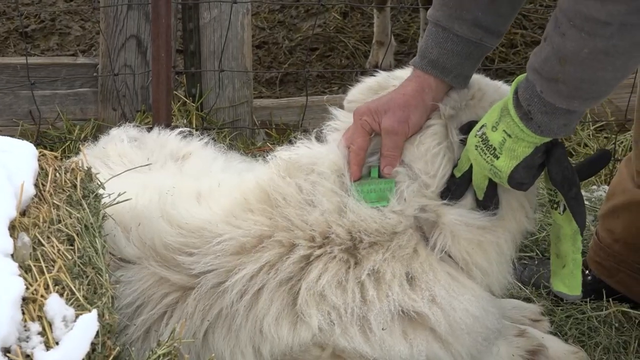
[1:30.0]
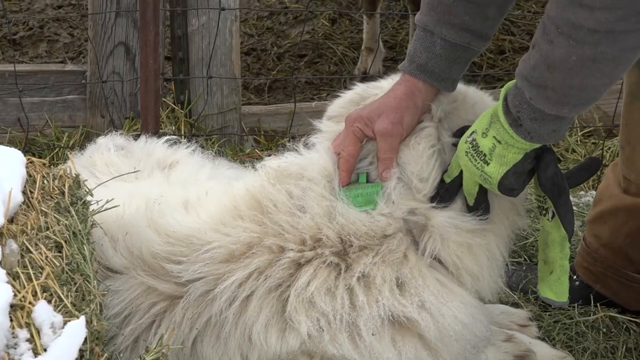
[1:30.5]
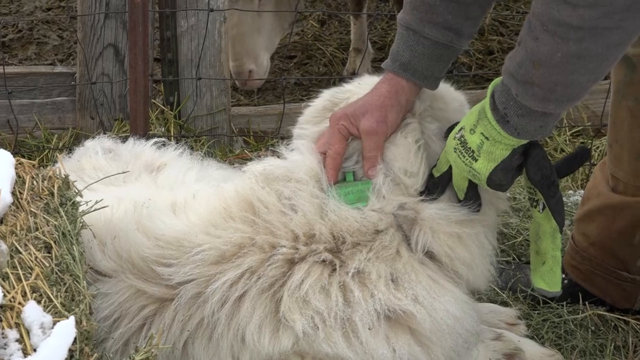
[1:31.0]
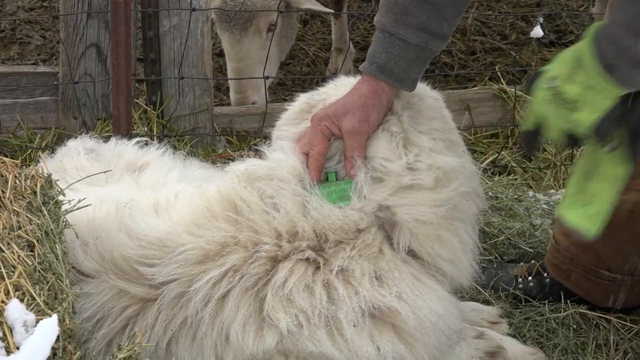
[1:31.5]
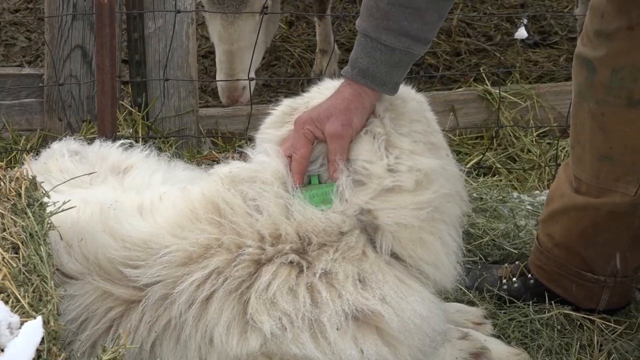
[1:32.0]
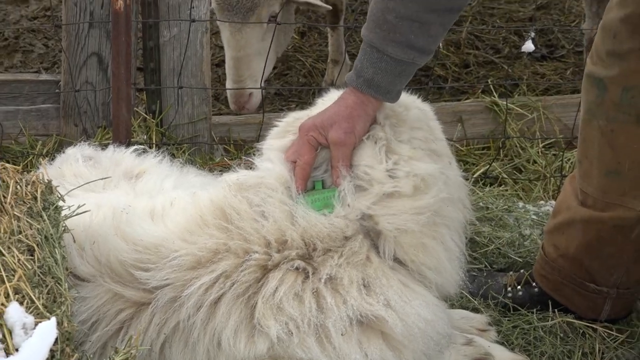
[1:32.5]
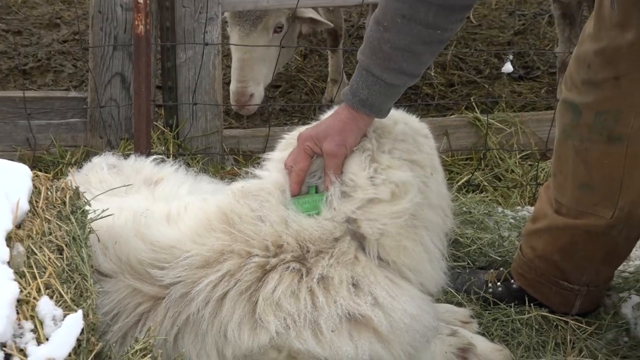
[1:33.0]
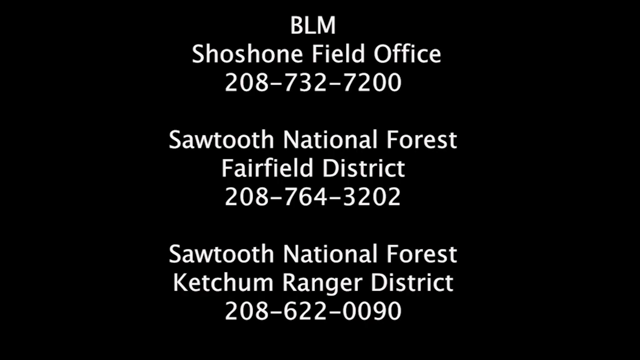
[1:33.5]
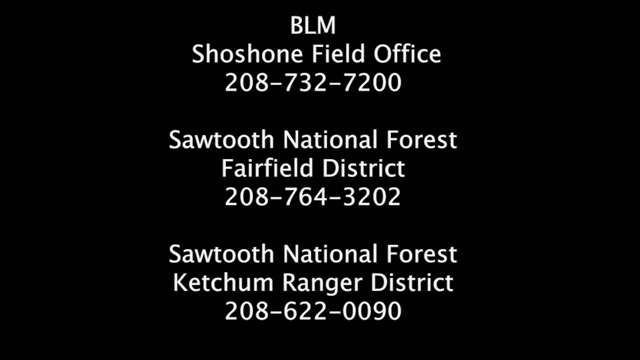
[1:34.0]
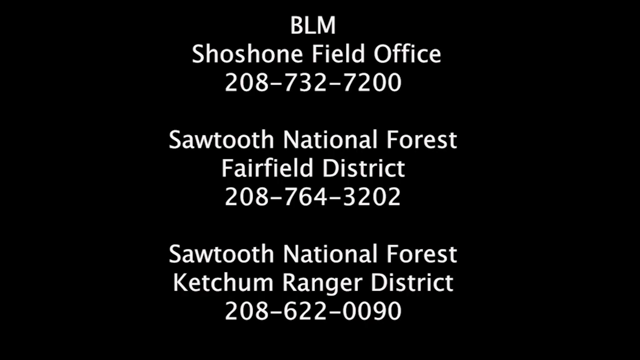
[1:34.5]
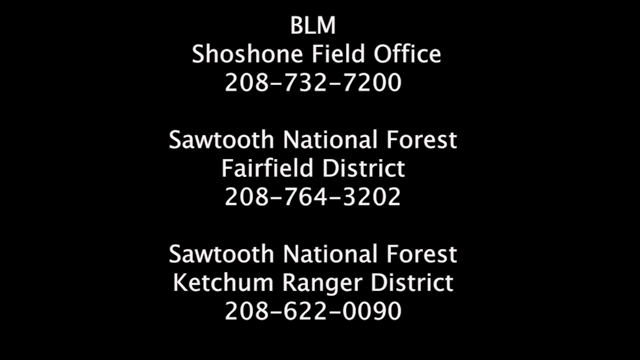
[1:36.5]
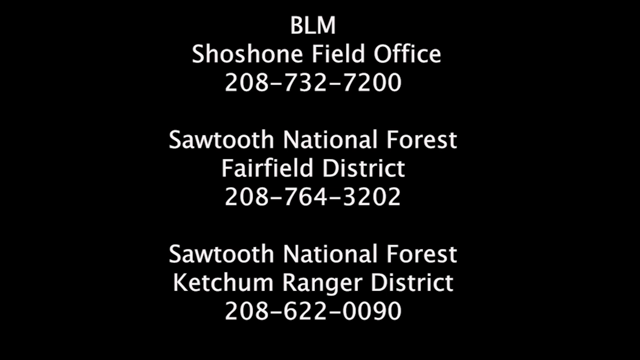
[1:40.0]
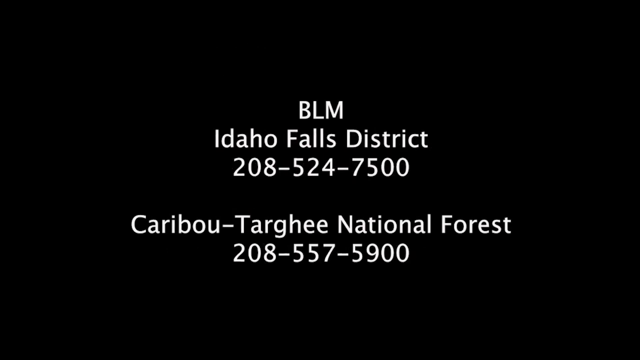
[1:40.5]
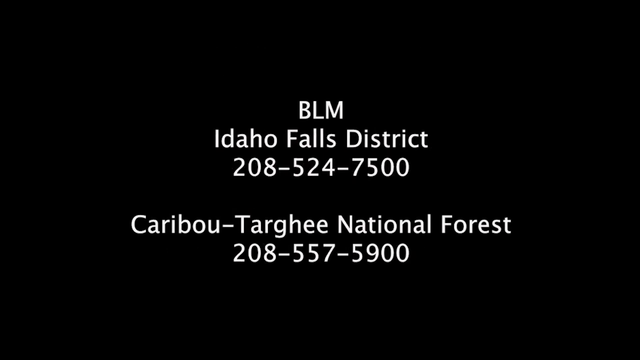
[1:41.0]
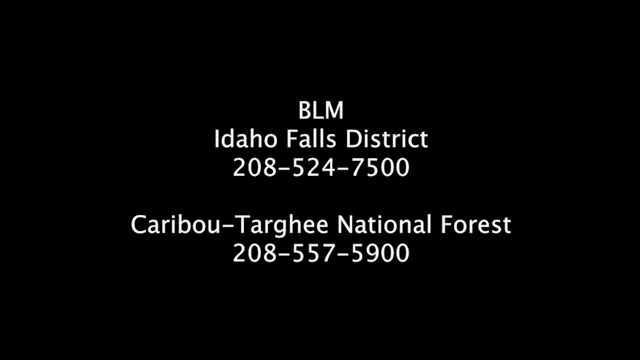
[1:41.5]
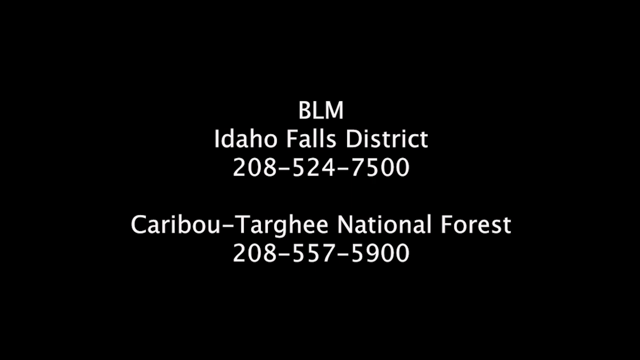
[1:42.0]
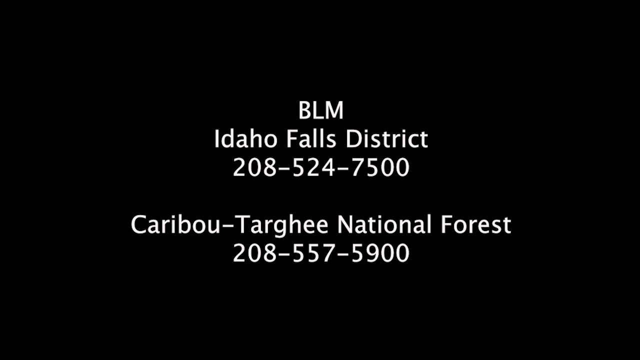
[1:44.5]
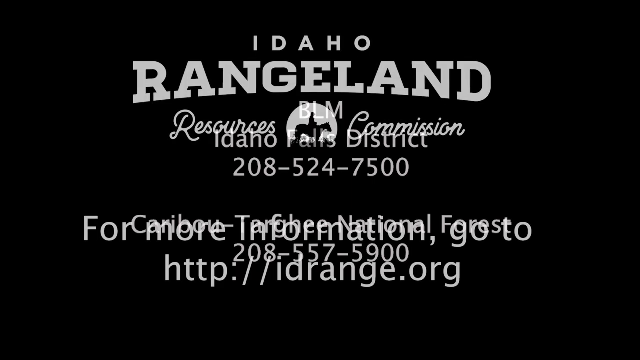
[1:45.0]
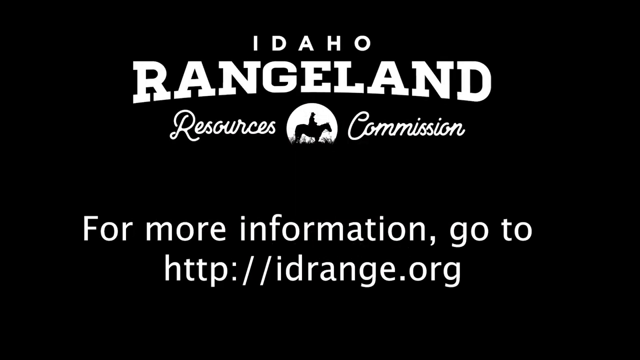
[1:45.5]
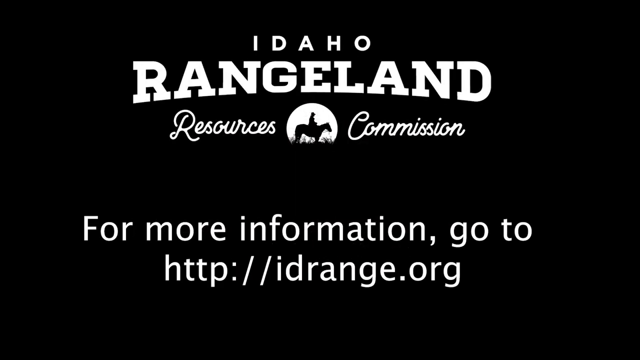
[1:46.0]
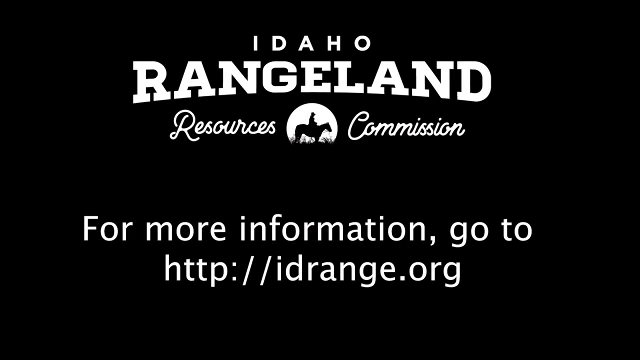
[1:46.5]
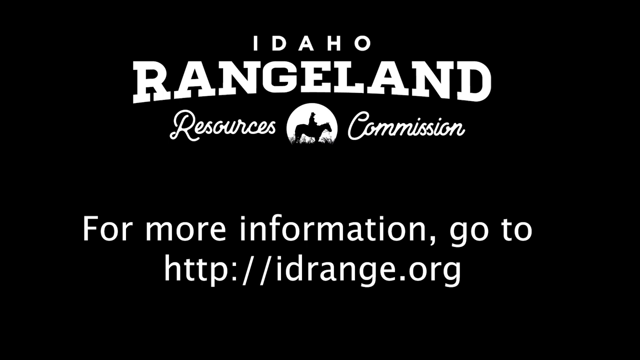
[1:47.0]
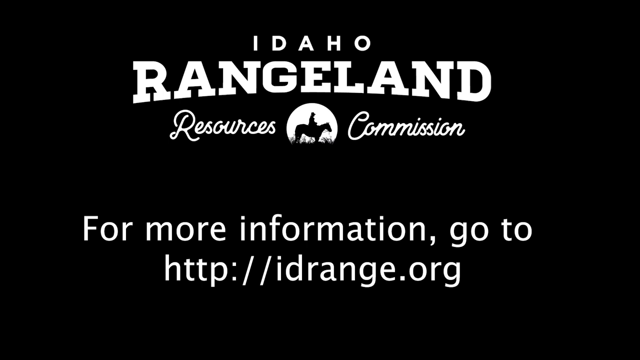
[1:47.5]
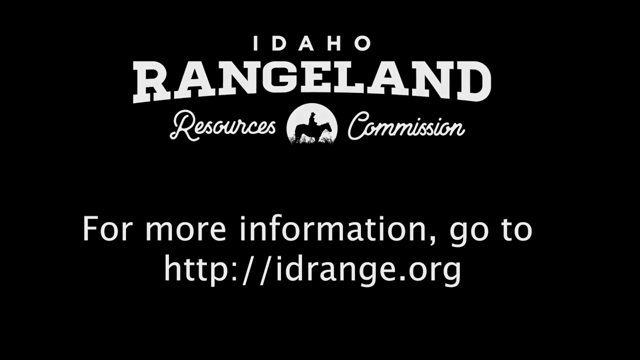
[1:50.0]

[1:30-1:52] A gentleman with a green tag puts a tag on one of the sheep. A list of numbers appears: "BLM" in capital letters, "Shoshone Field Office", "208-732-7200"; "Sawtooth National Forest, Fairfield District 208-764-3202"; "Sawtooth National Forest, Ketchum Ranger District", "208-622-0090"; "BLM Idaho Falls District, 208-524-7500"; "Karibu Tangi National Forest, 208-557-5900"; and "Idaho Range Land Resources Commission, Idaho District", "208-524-7500". It also reads "For more information, go to http://idrange.org".